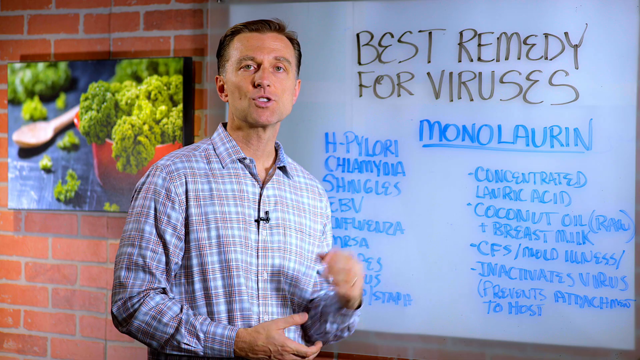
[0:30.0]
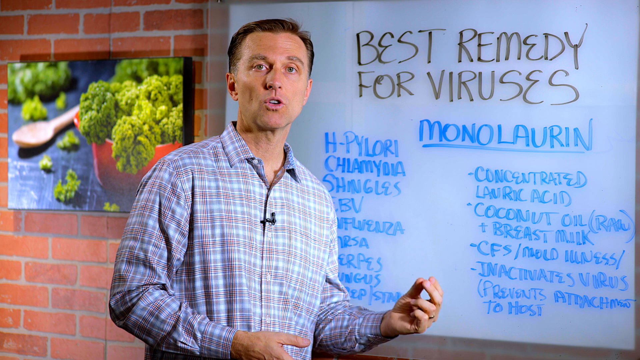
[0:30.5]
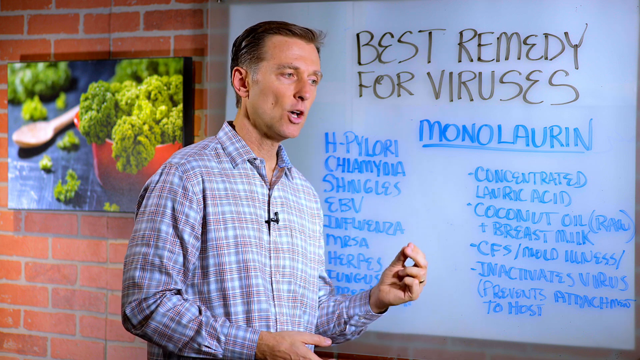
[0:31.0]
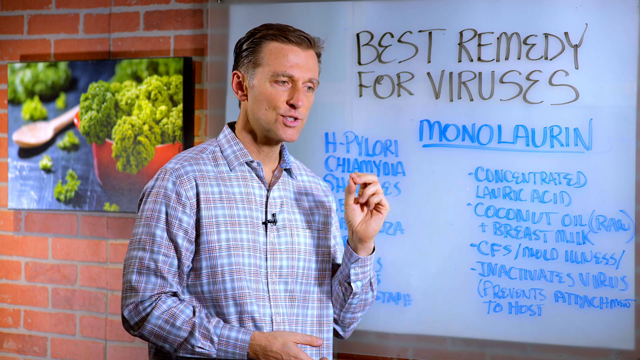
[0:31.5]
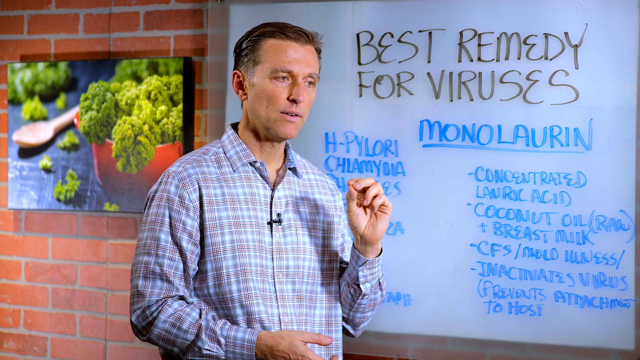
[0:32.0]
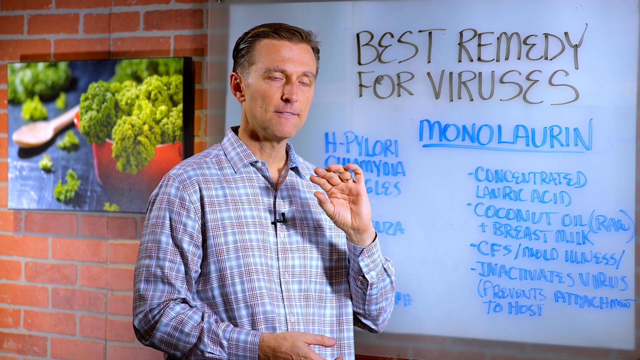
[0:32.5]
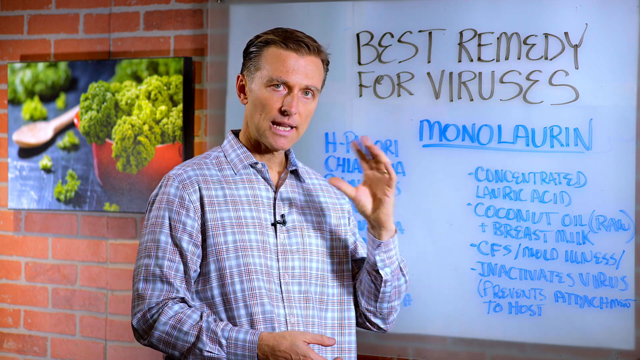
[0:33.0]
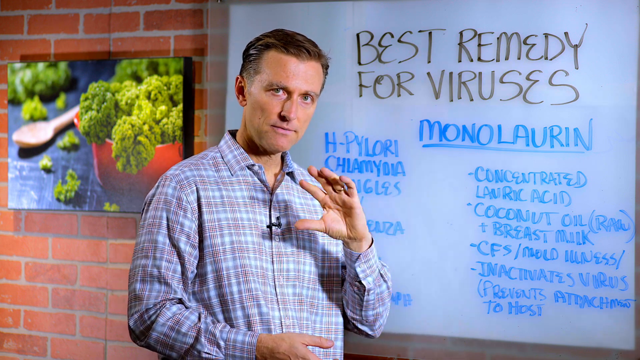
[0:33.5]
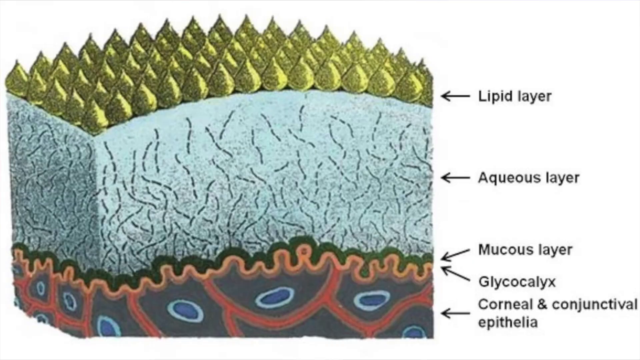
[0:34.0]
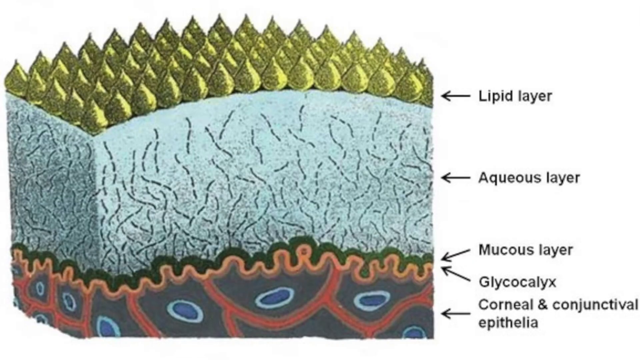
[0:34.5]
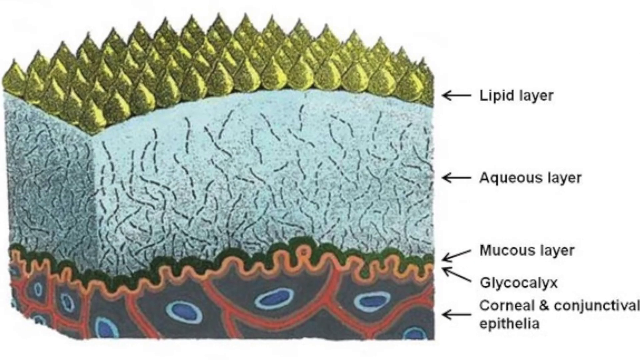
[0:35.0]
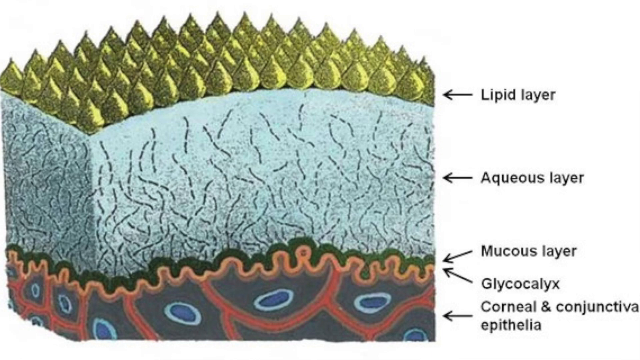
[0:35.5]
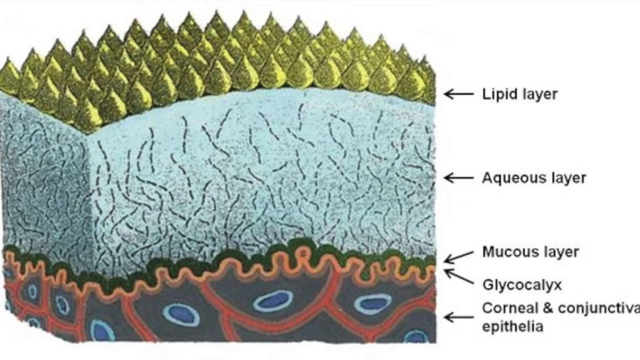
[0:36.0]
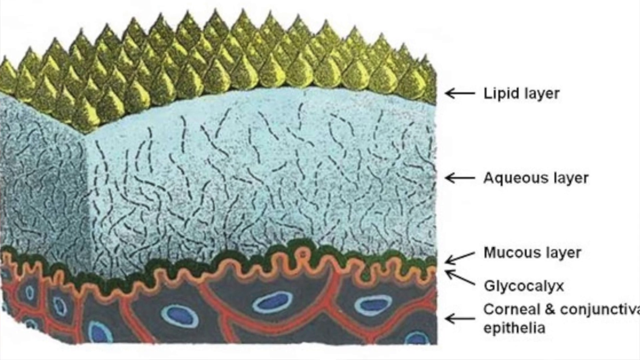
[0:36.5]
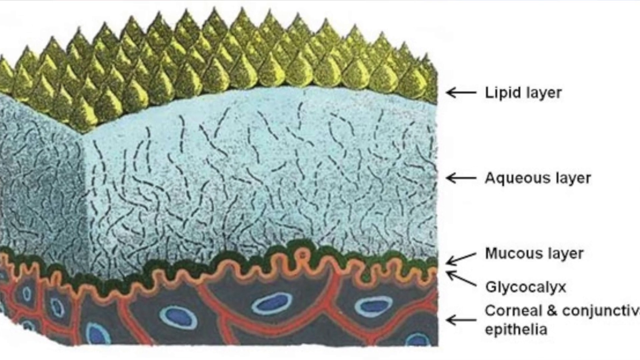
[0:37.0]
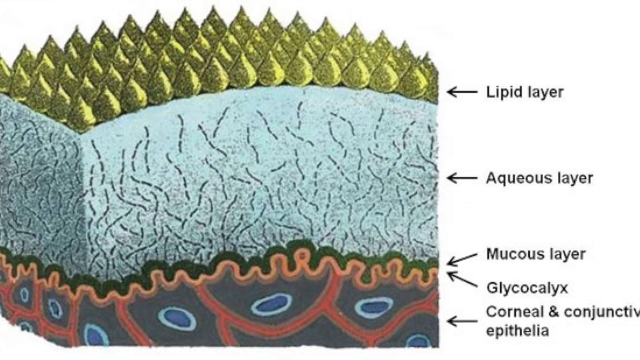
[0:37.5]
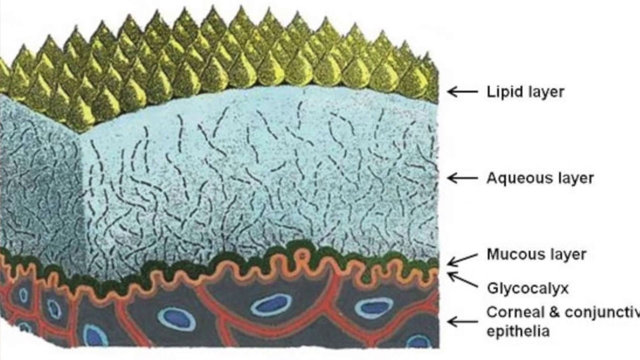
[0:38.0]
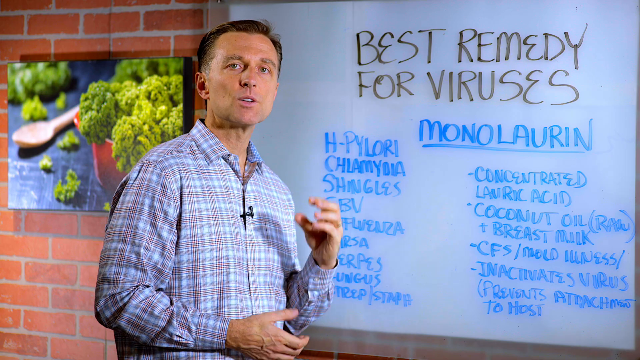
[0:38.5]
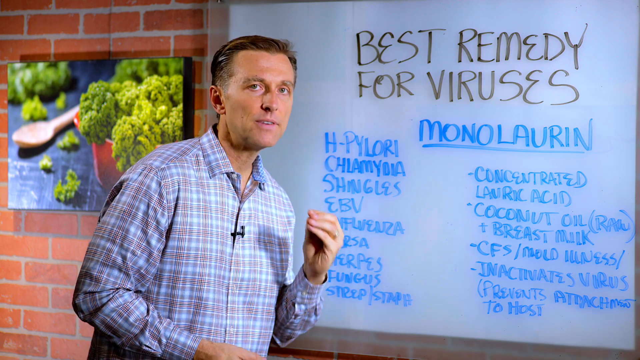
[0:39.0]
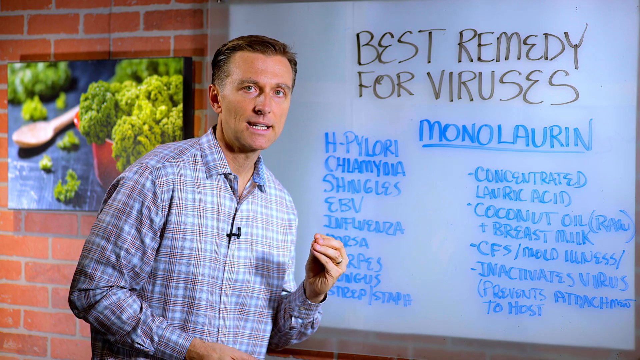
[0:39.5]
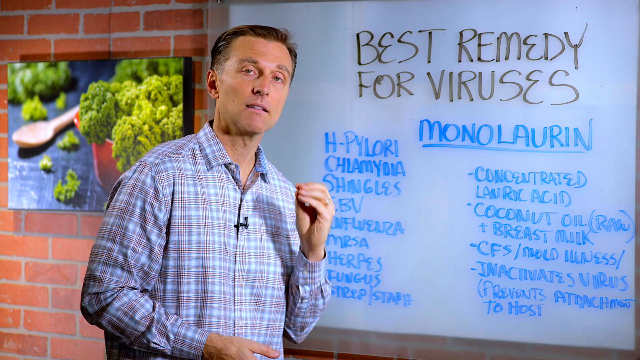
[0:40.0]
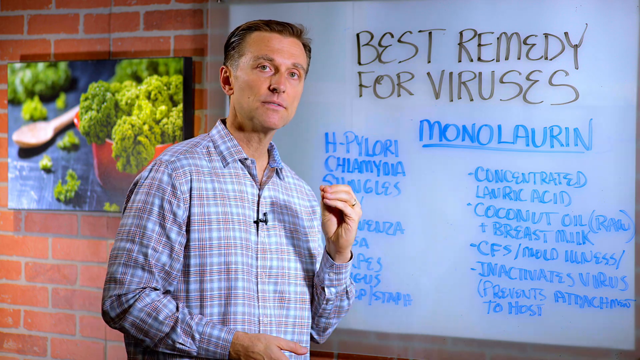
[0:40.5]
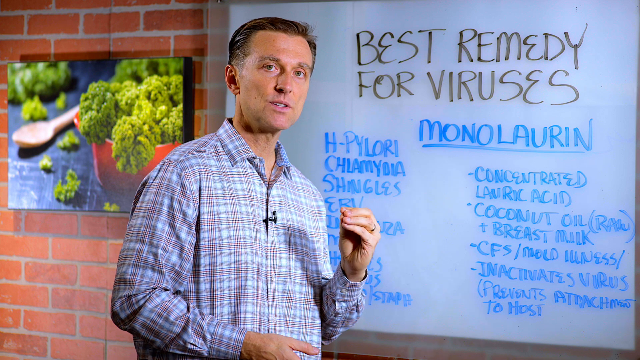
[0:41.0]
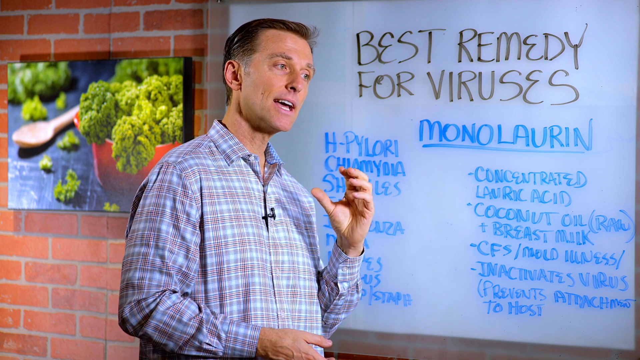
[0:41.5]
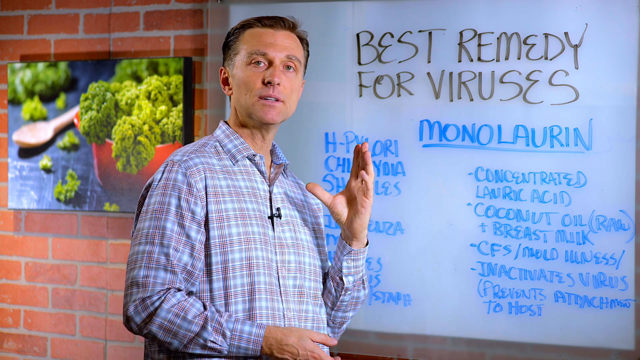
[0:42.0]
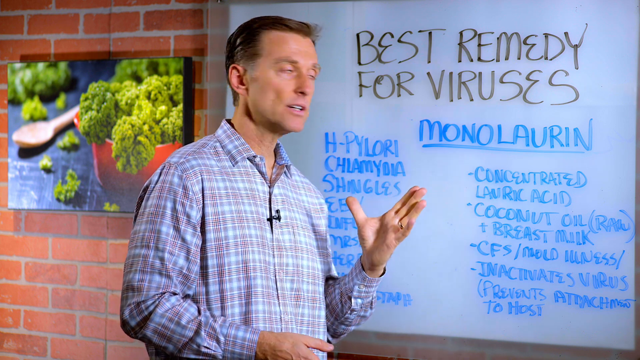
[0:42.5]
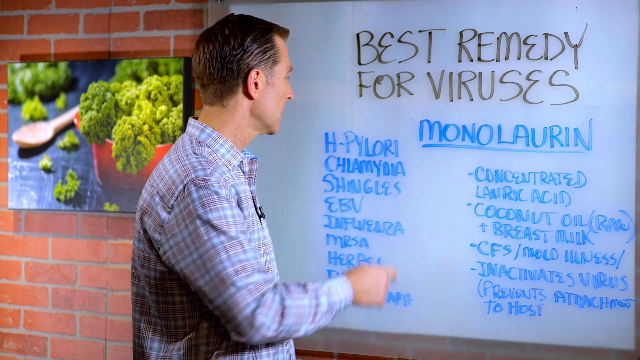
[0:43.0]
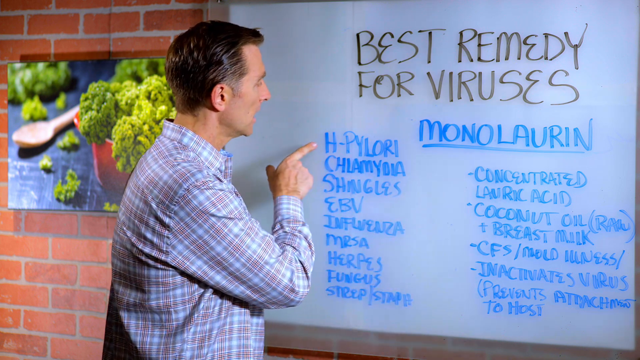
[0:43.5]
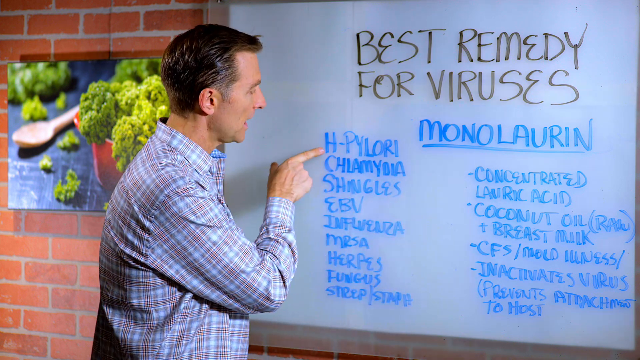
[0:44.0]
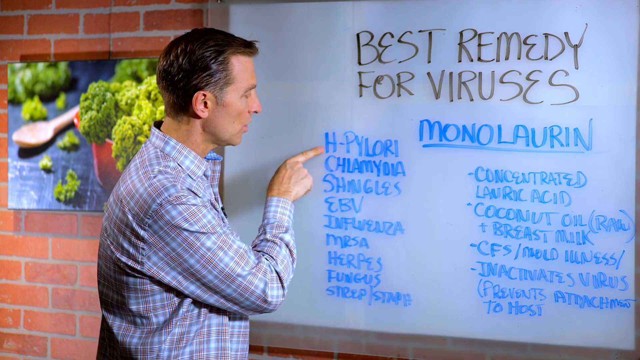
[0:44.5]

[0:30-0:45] A man stands in front of a large screen, lecturing to the viewer or audience and pointing to a list under the words "best remedy for viruses," about a supplement called monolaurin. A cutout appears showing different layers: lipids, a mucus layer and an aqueous layer. A tiny microphone is clipped to the front of his shirt between two buttons, and he uses his hands as he talks, either to point or to emphasize words.